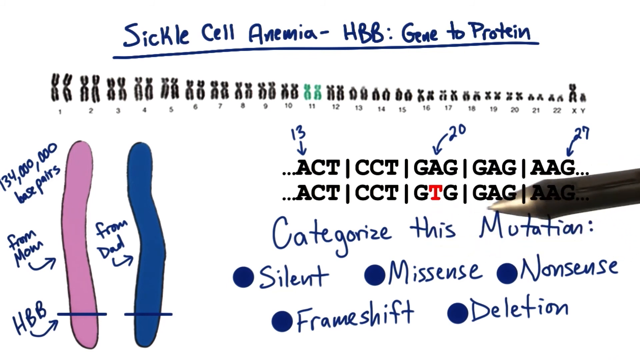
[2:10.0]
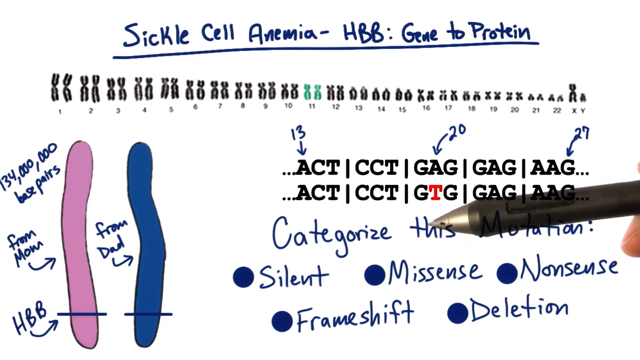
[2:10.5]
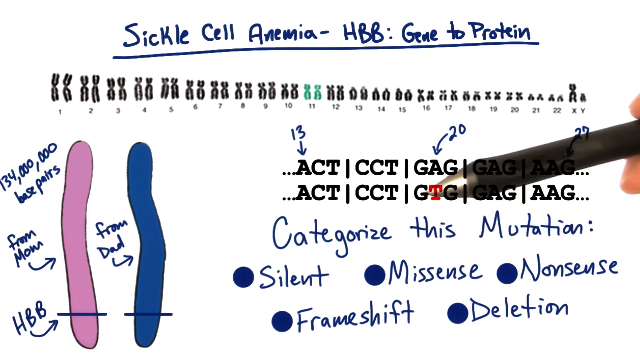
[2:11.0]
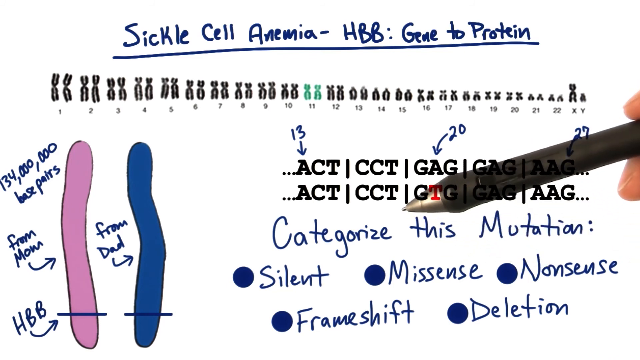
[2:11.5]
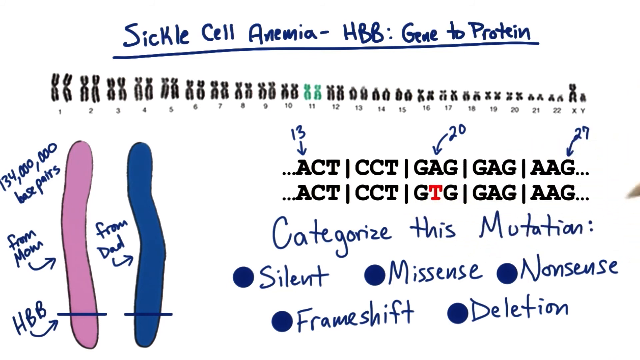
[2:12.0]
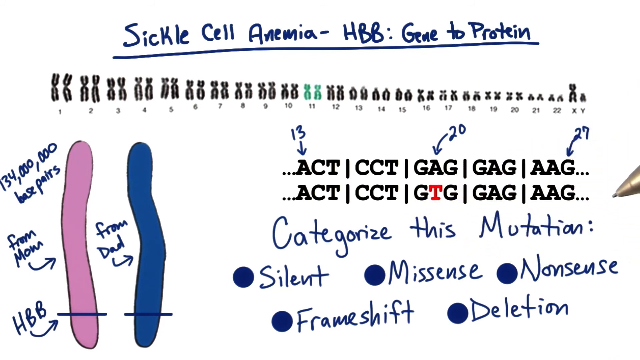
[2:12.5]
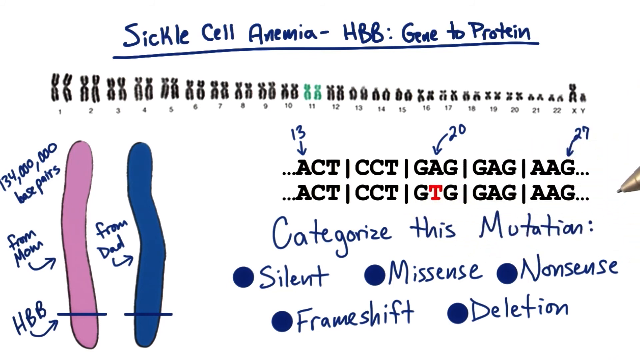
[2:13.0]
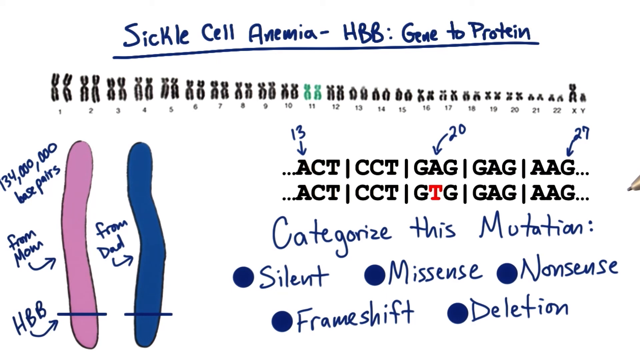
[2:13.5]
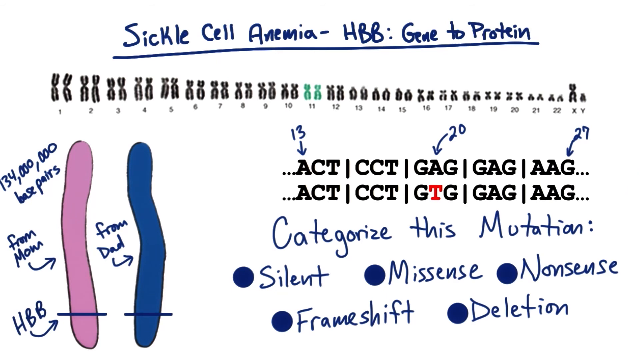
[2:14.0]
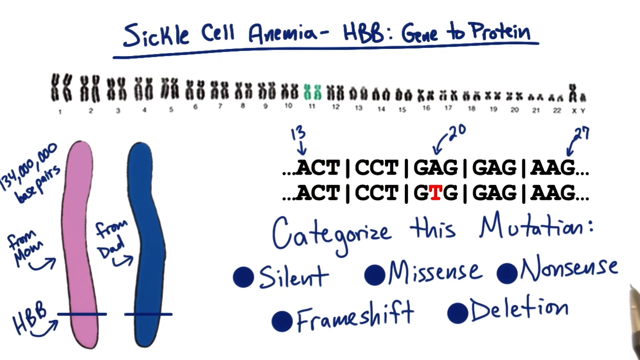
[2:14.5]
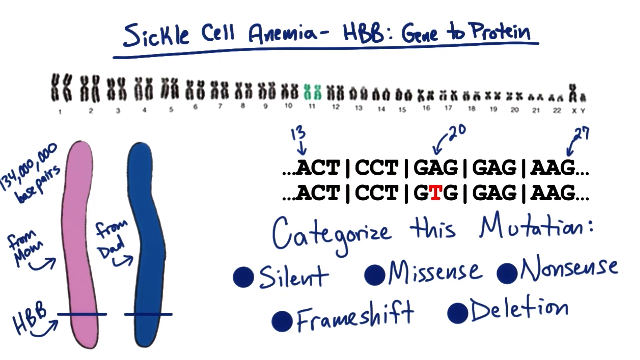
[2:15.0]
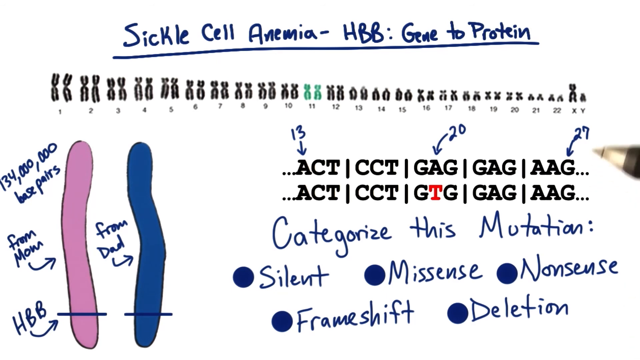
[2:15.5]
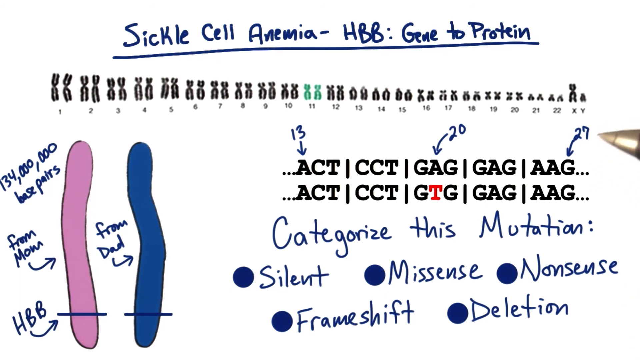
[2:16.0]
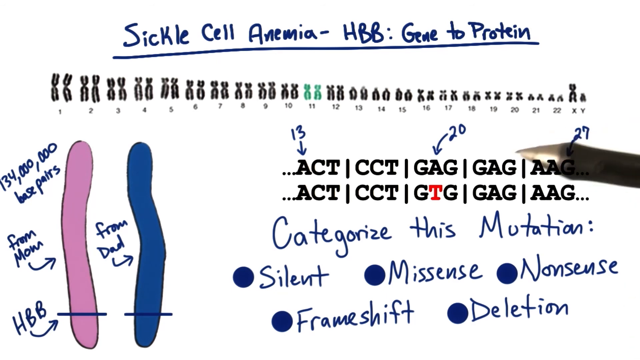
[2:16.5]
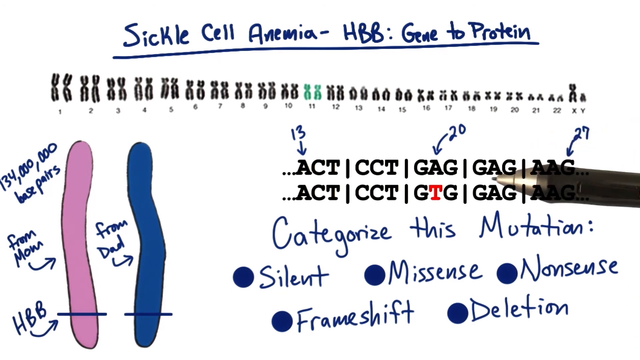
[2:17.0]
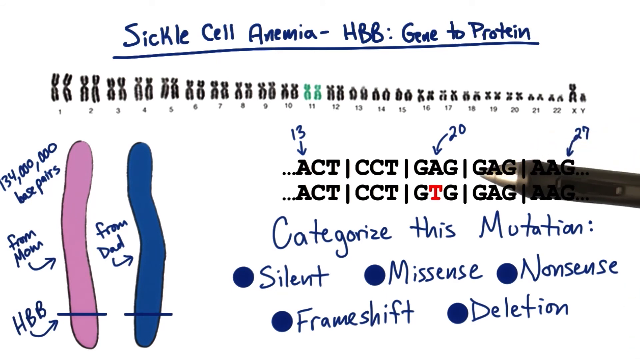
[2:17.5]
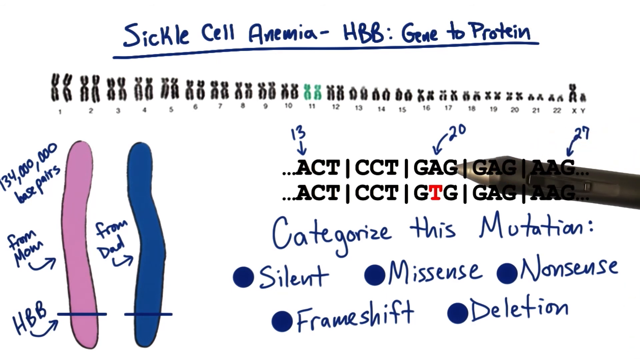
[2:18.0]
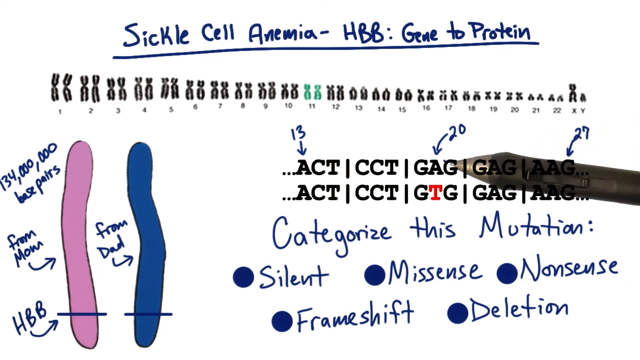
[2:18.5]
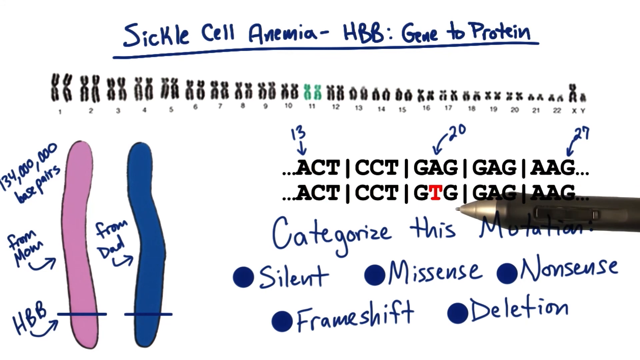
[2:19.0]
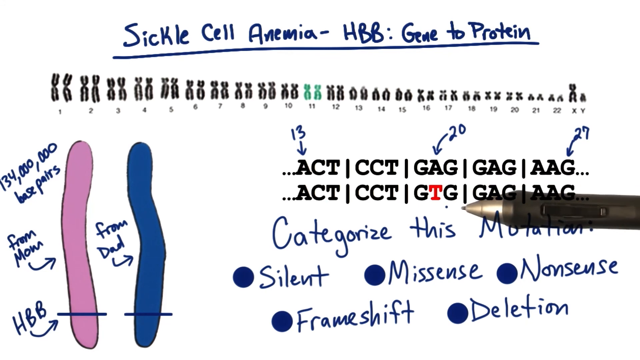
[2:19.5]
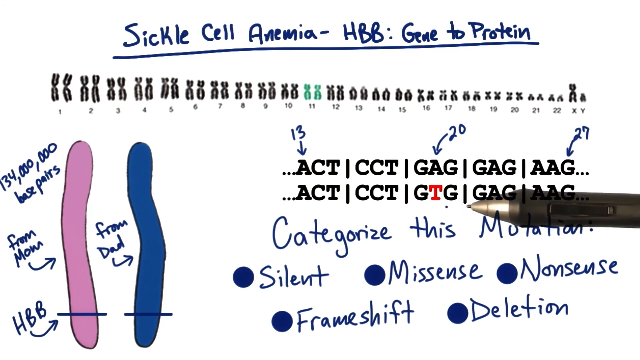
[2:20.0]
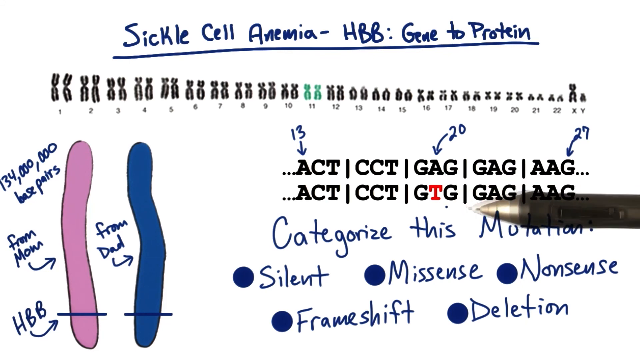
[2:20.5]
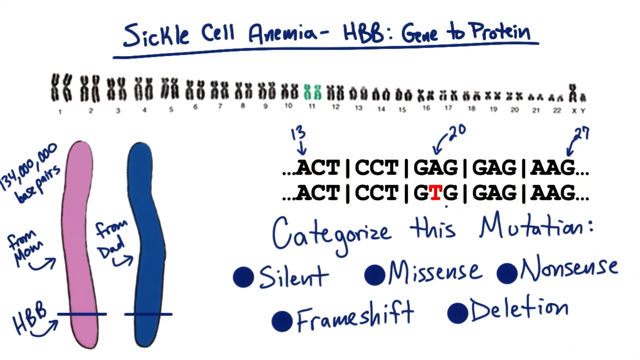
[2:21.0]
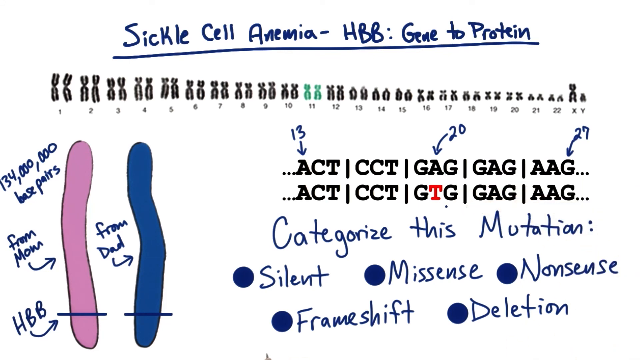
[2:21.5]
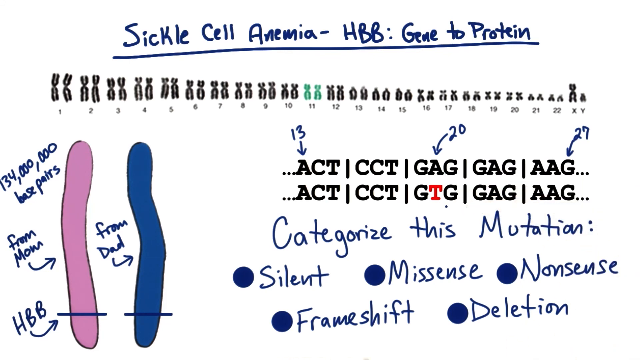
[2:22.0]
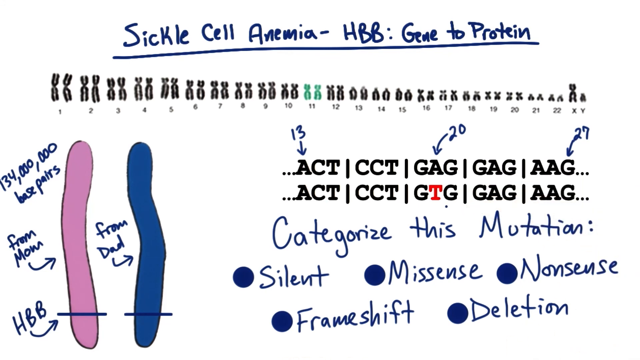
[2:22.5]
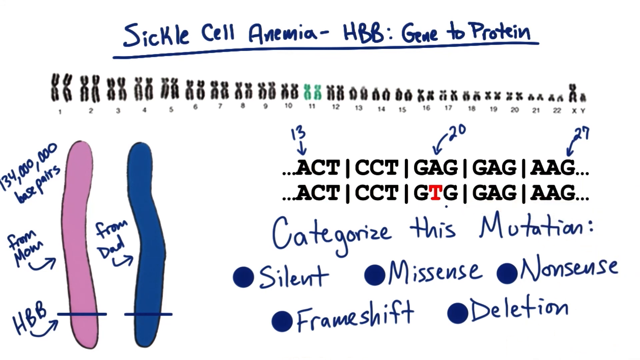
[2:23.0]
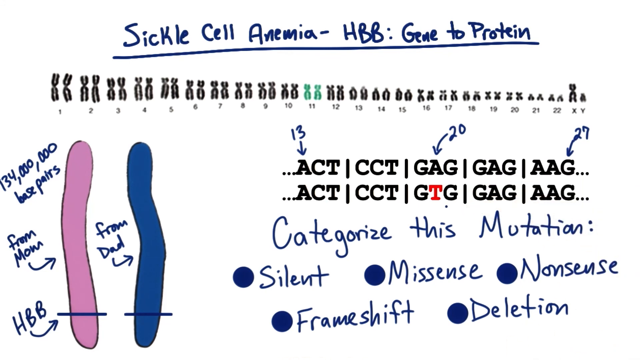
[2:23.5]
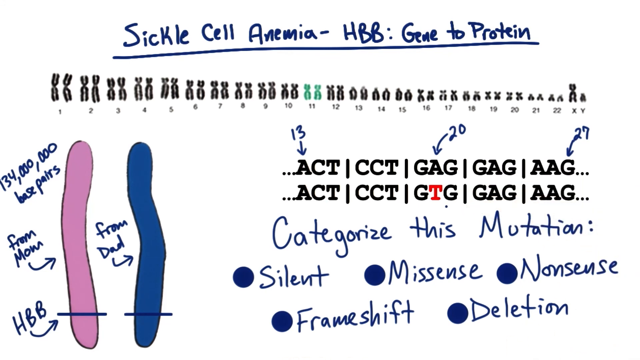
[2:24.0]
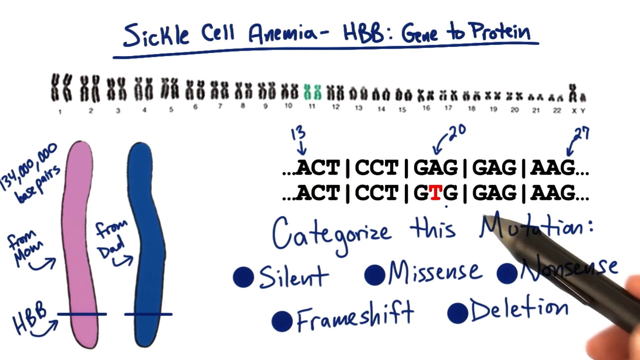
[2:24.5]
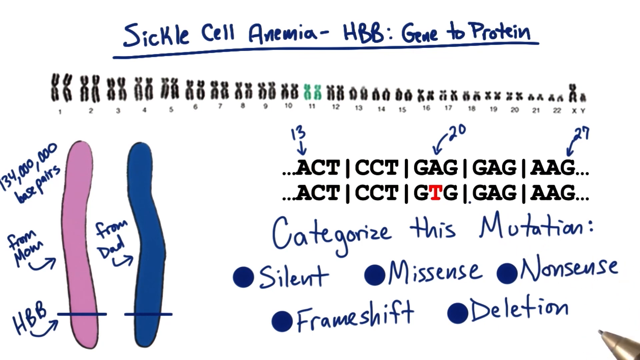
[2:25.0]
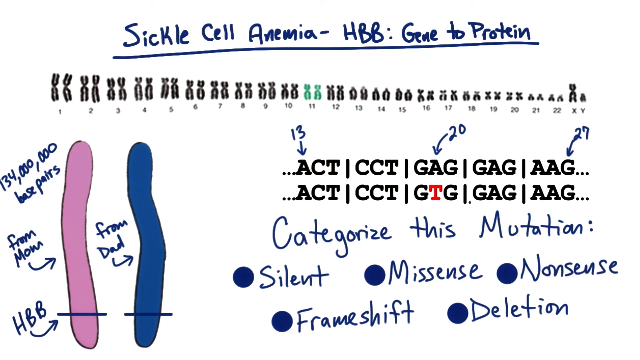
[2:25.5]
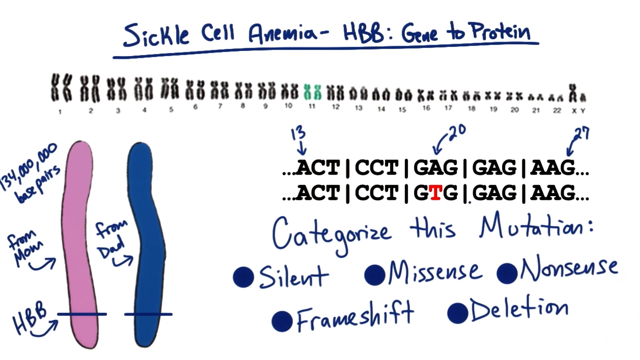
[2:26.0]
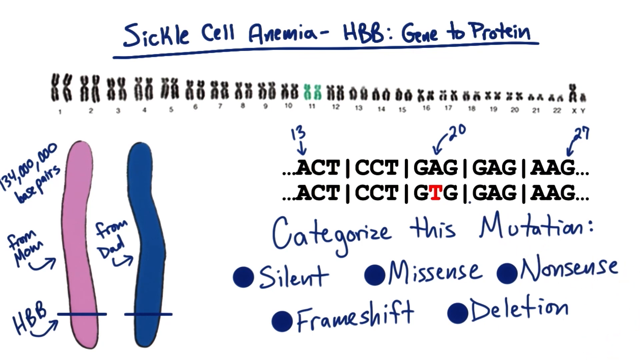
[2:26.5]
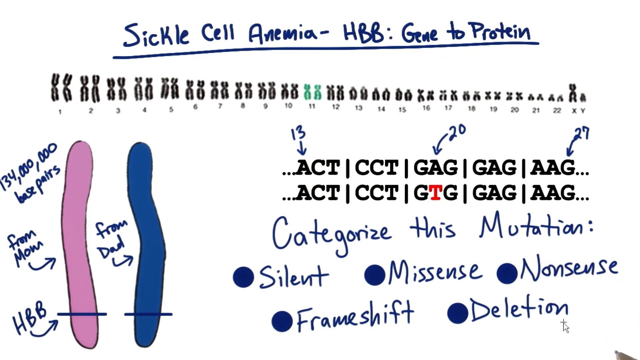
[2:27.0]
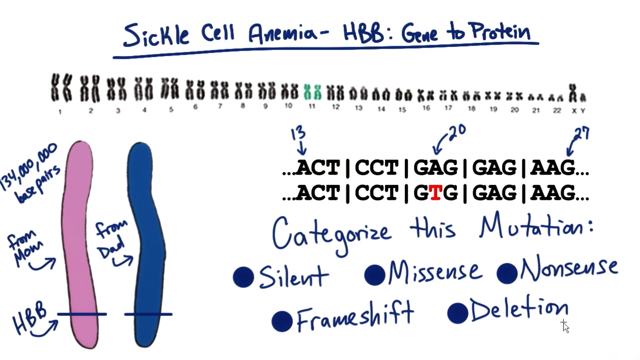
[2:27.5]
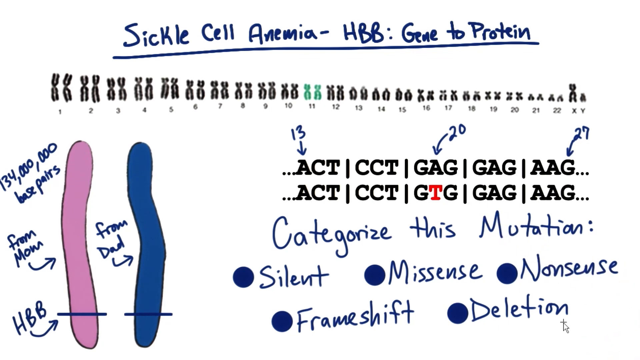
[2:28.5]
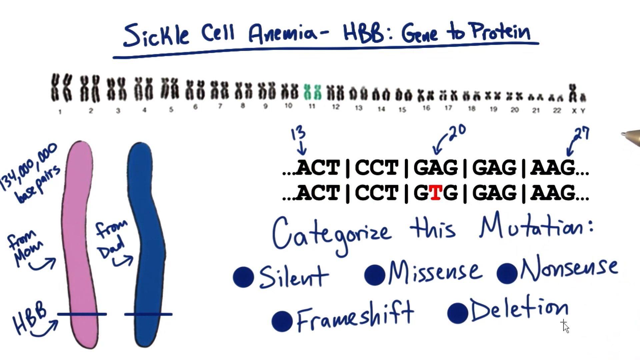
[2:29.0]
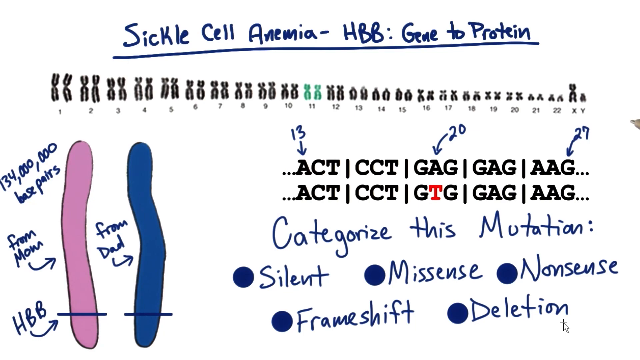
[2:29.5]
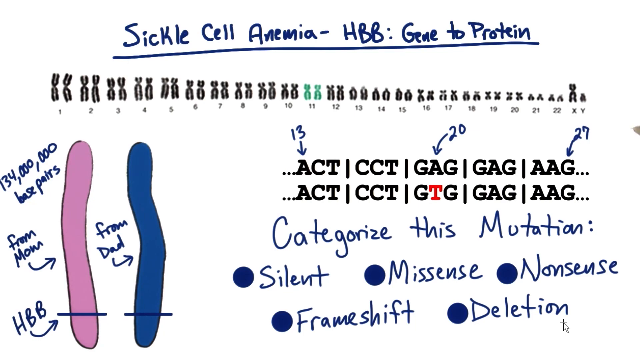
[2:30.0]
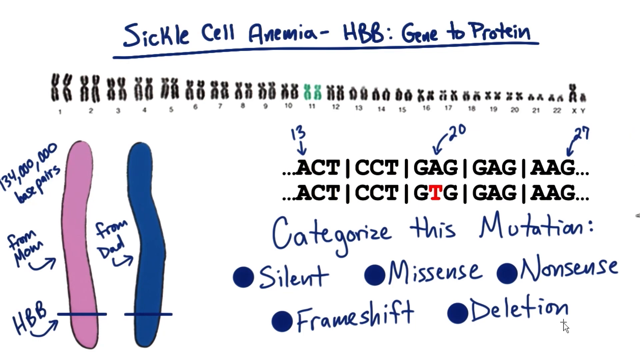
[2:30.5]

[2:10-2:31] The listed mutations appear in bullet-point form. The host hovers over the three-letter code, focusing especially on the code in the middle and pointing to that section many times. The slide looks complete. He goes over the whole slide, pointing especially at the three-letter code divided into two lines. Like the other slides, this one has a very bright white background, and half of it is in handwriting while the other half isn't.